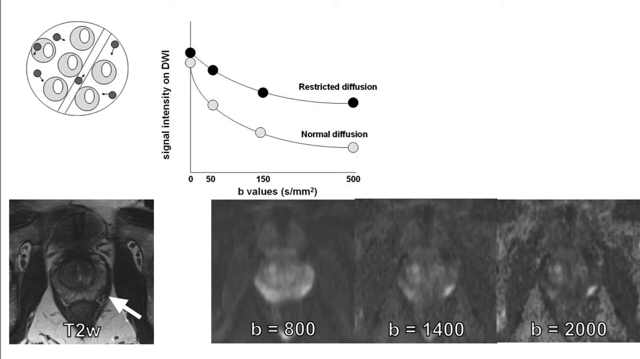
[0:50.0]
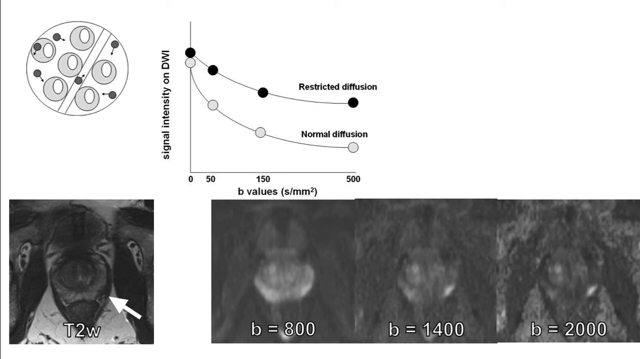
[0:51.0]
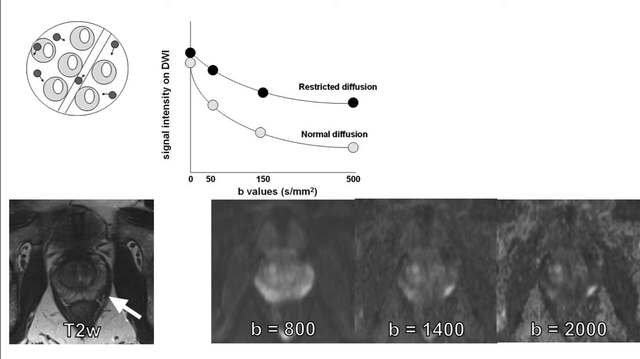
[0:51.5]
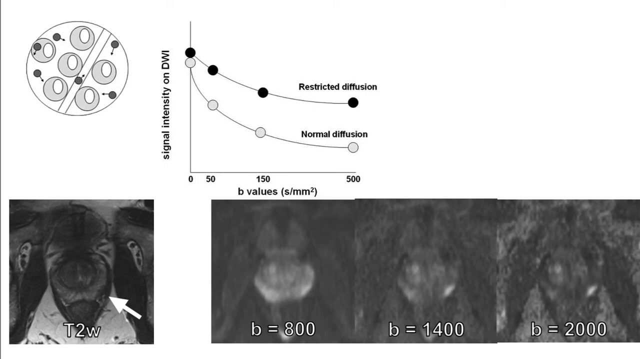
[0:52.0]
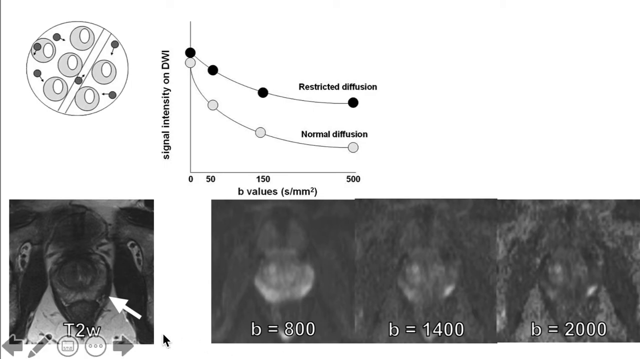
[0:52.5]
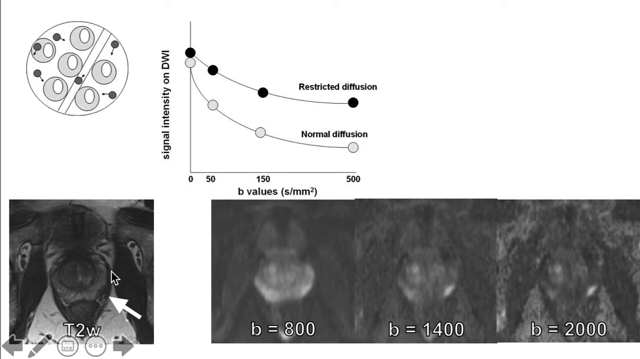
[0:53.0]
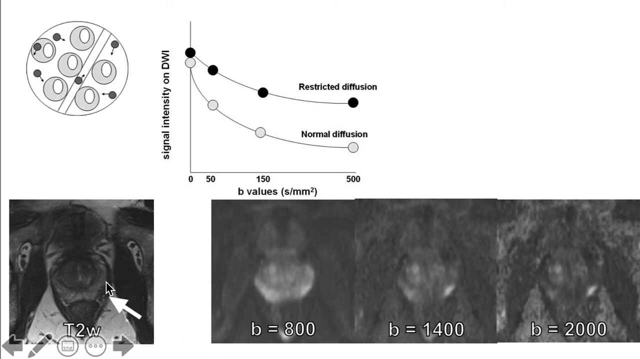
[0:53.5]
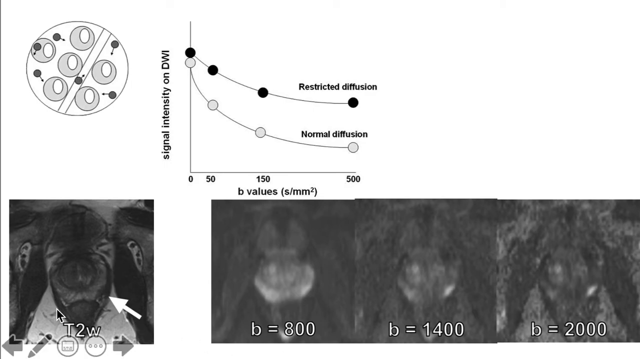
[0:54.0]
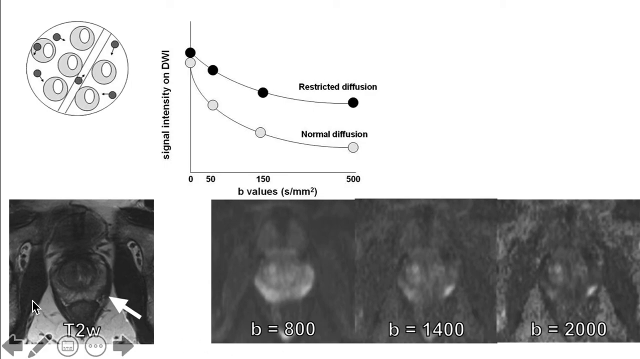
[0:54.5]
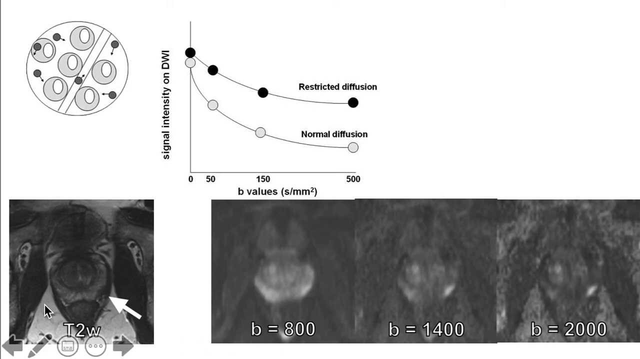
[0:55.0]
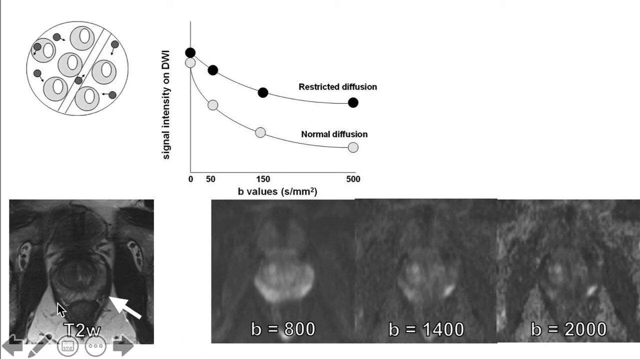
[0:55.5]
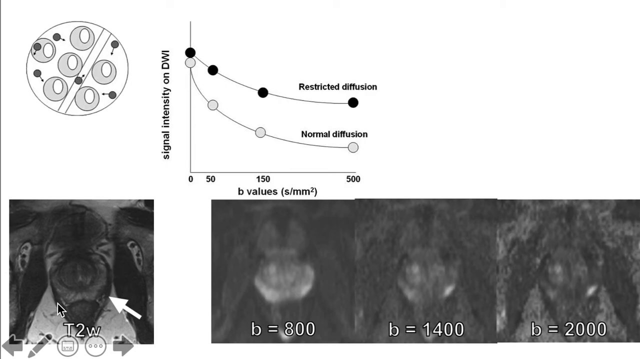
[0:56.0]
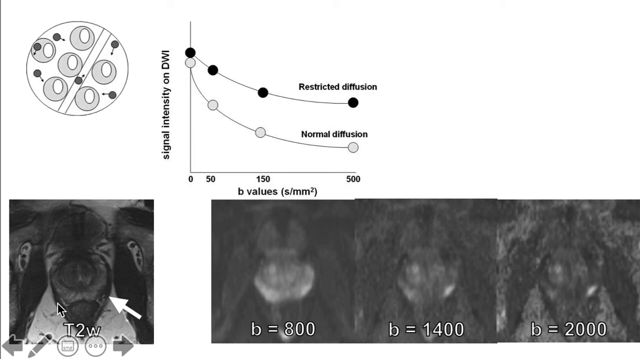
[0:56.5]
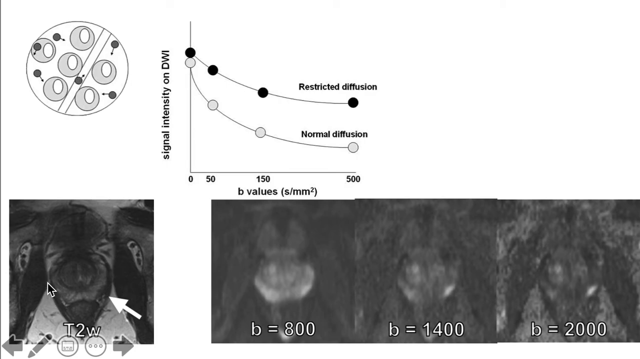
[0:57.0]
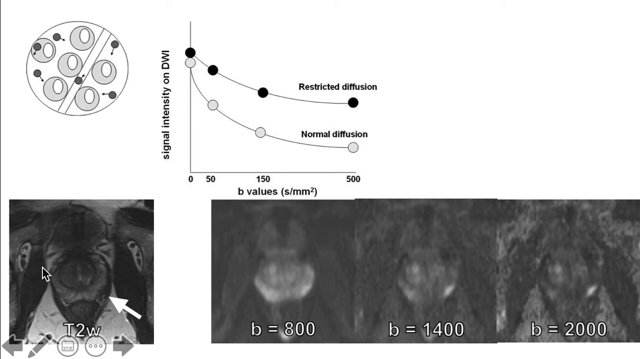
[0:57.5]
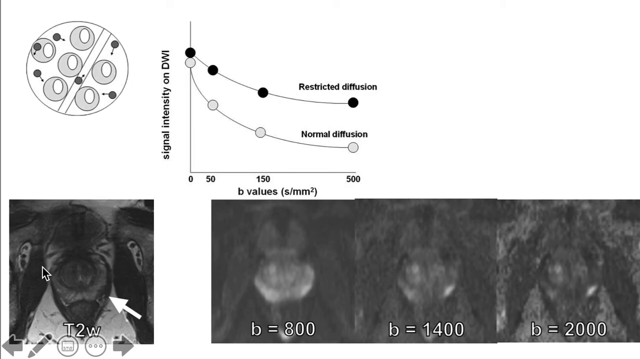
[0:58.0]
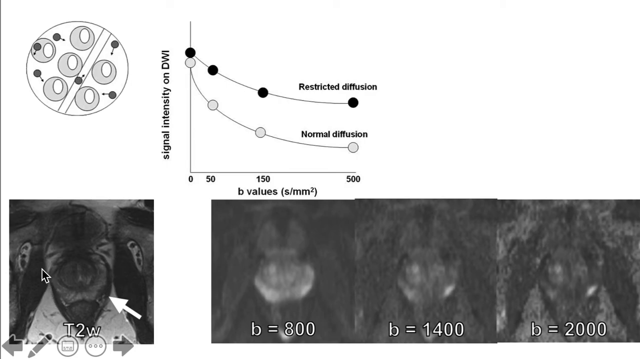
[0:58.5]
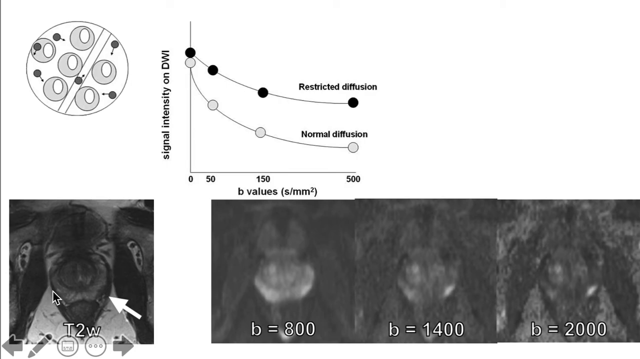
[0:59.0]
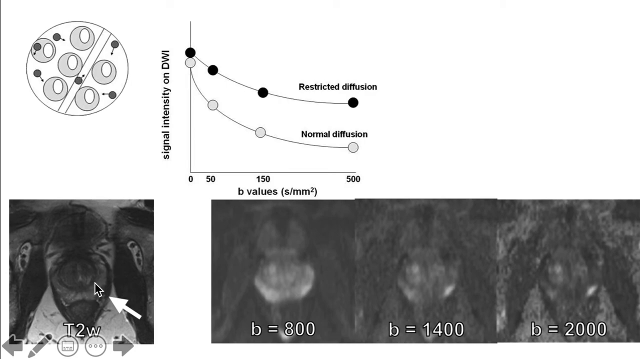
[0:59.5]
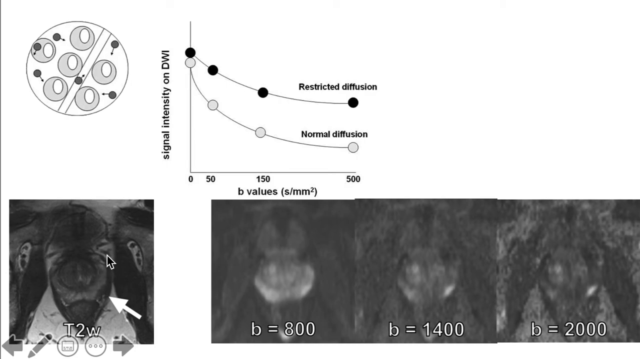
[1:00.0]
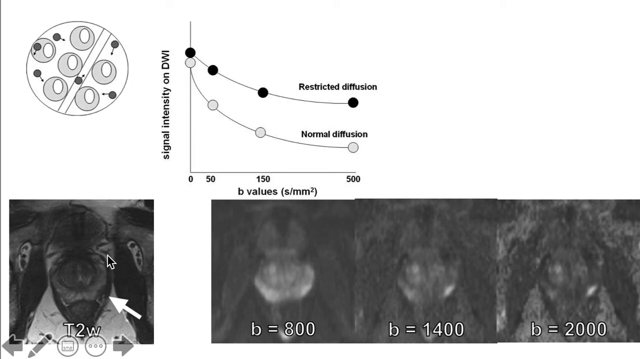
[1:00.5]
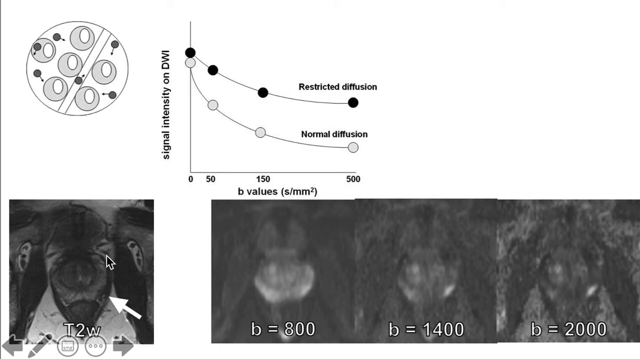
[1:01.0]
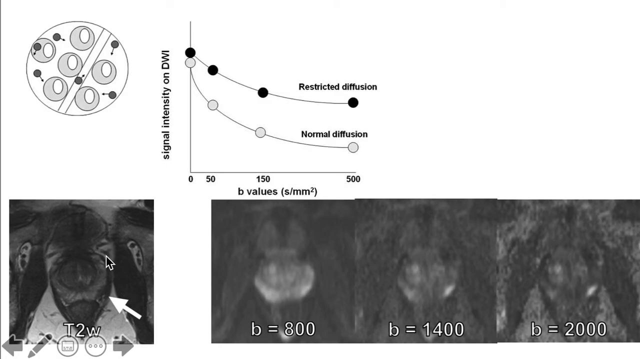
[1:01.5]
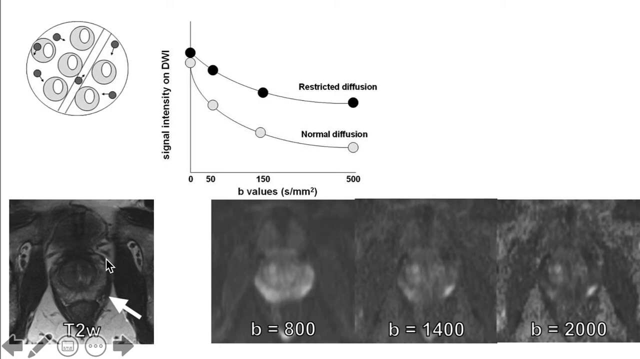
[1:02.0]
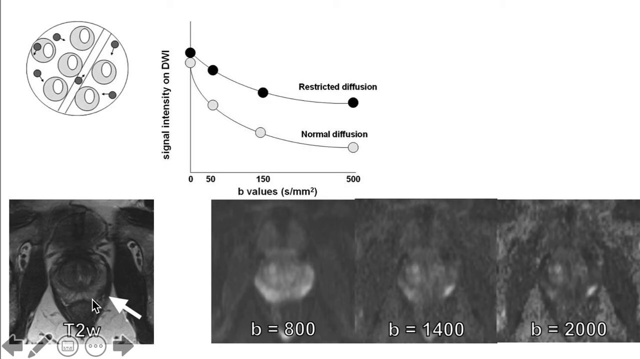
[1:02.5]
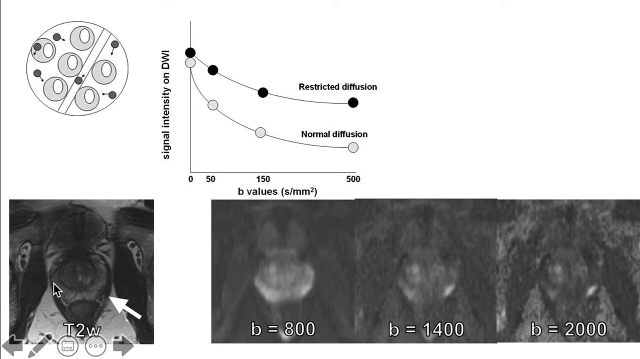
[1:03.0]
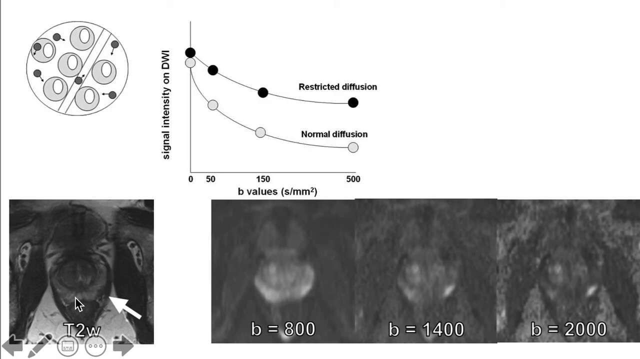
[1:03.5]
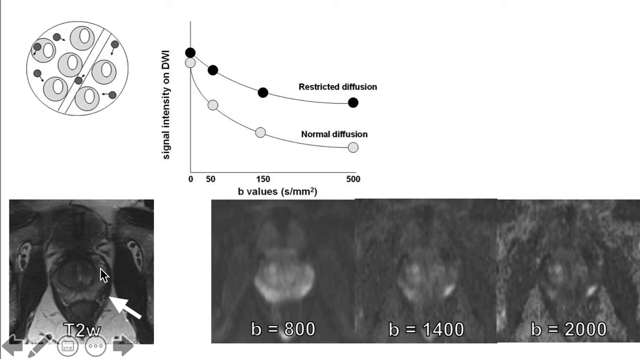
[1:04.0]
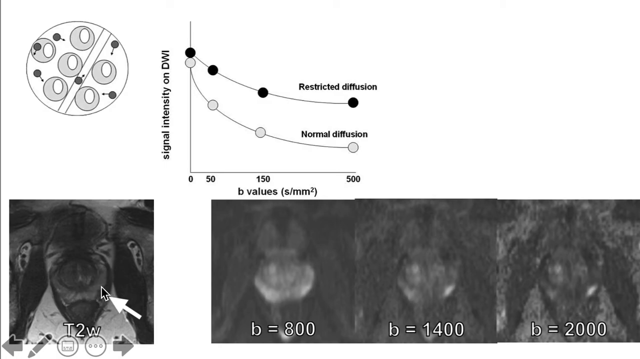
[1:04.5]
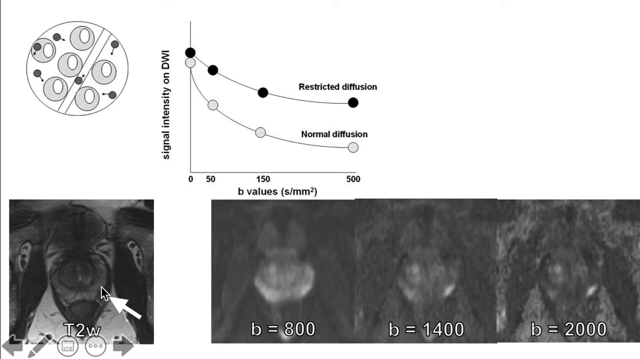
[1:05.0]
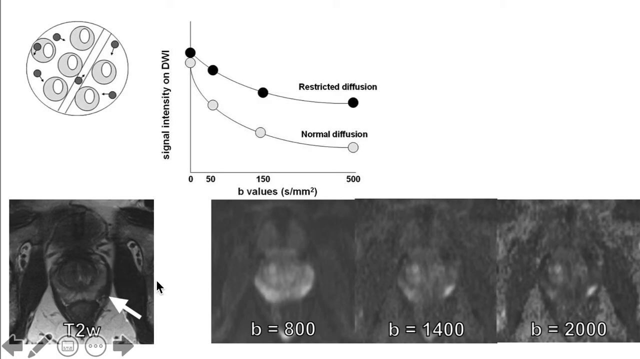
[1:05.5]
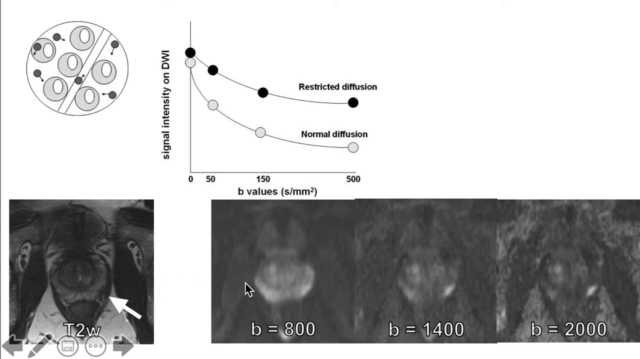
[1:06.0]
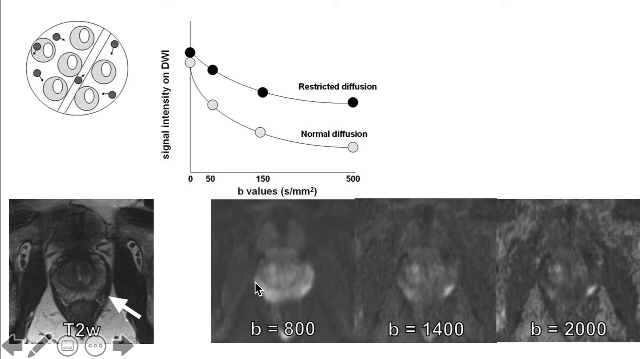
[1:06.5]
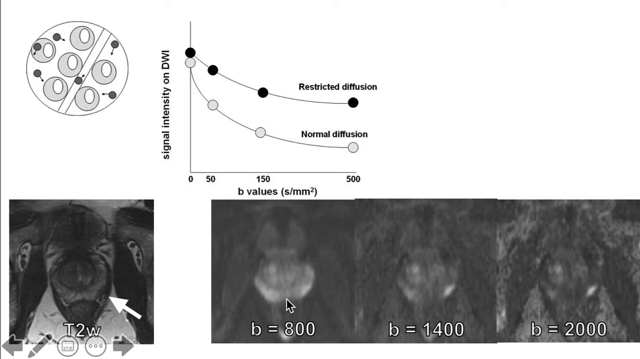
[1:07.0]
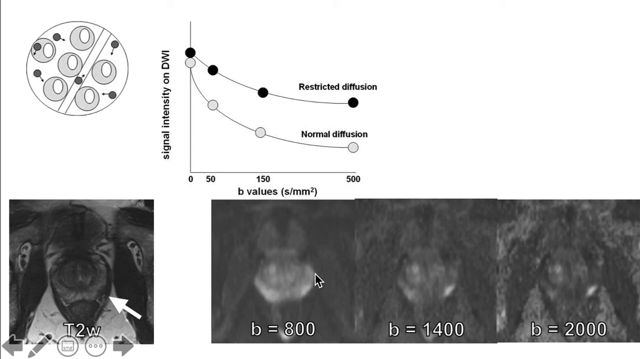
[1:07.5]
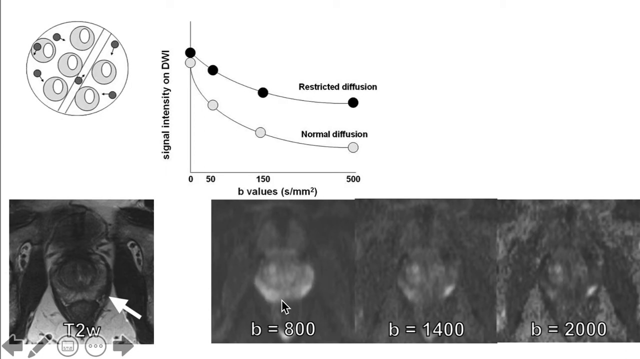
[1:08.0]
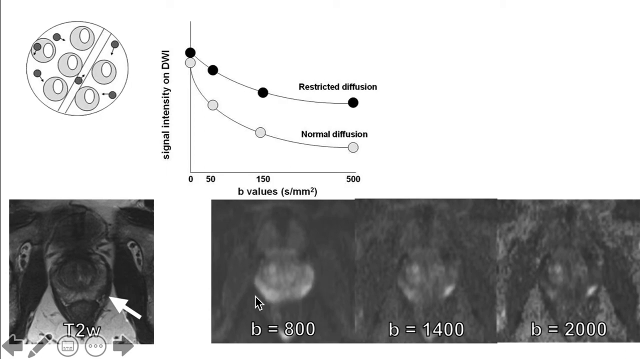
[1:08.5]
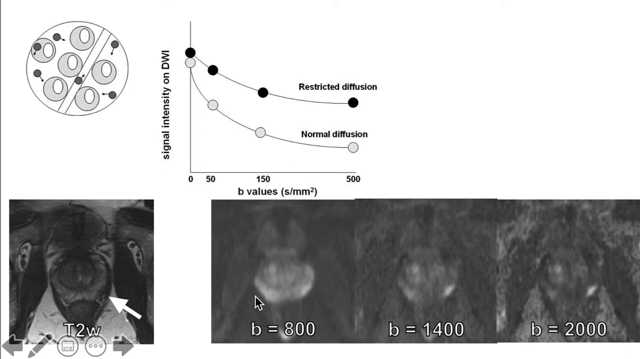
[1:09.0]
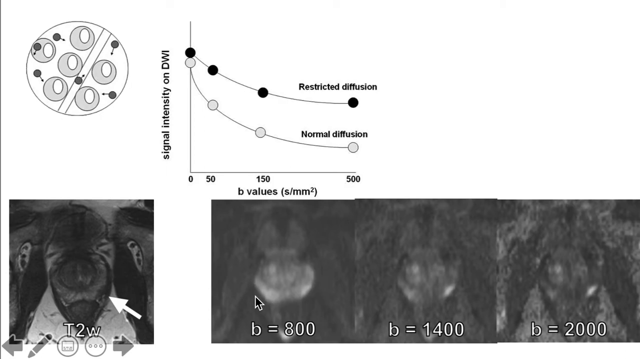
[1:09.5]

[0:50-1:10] A diagram shows several small black circles and several light gray circles. In the bottom left-hand corner, a cursor moves around the x-ray or micrograph image, and it also moves around other images. In the upper left-hand corner is a circle with many other circles inside it. Everything is set against a white background. The graph's labels read "signal intensity on DWI," with "B values" along the bottom, plus the labels "restricted diffusion" and "normal diffusion." The mouse shows this is a recording of a computer screen. Several icons are in the bottom left-hand corner, including a left arrow and a right arrow, both translucent gray.